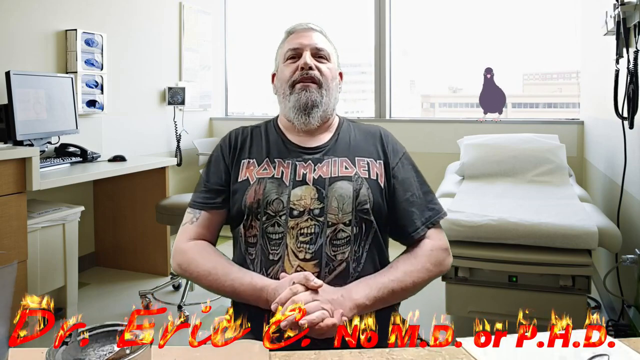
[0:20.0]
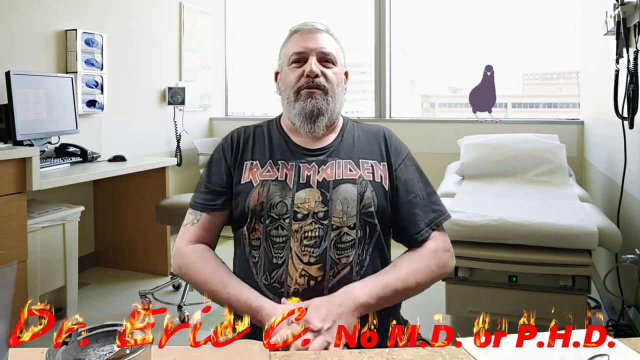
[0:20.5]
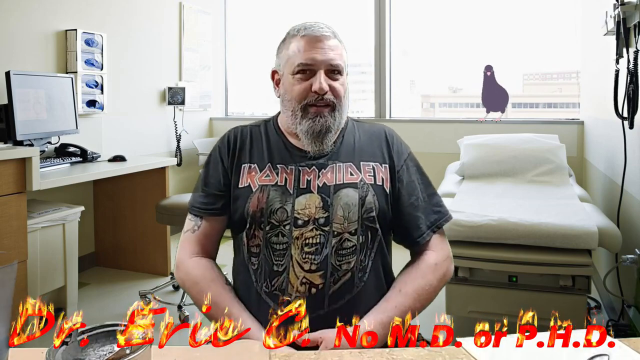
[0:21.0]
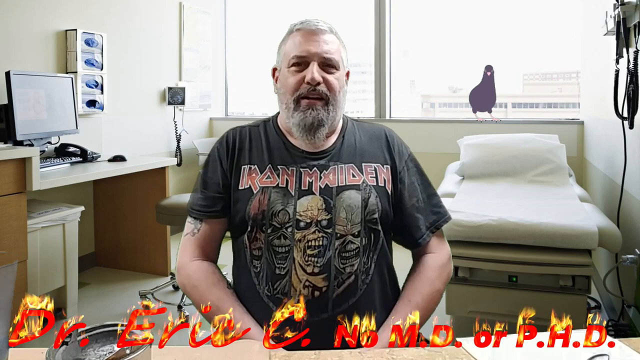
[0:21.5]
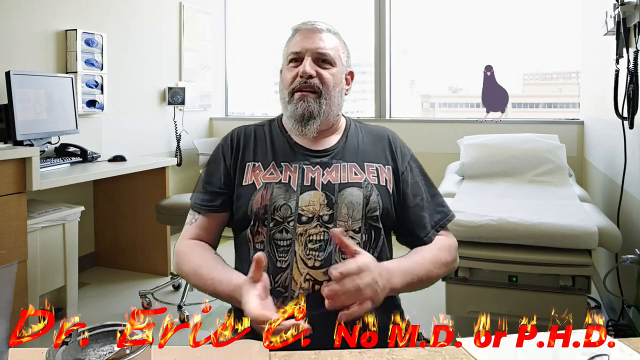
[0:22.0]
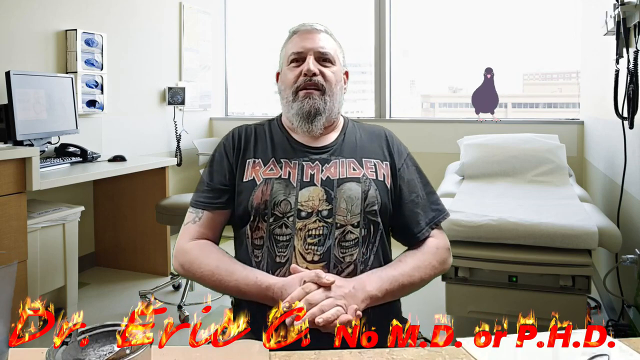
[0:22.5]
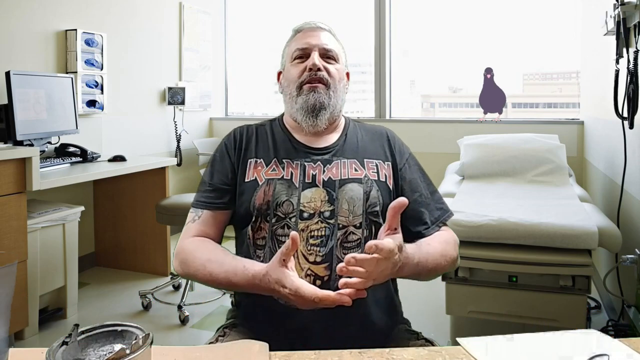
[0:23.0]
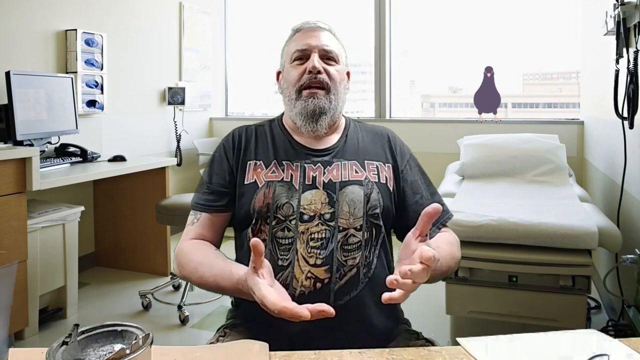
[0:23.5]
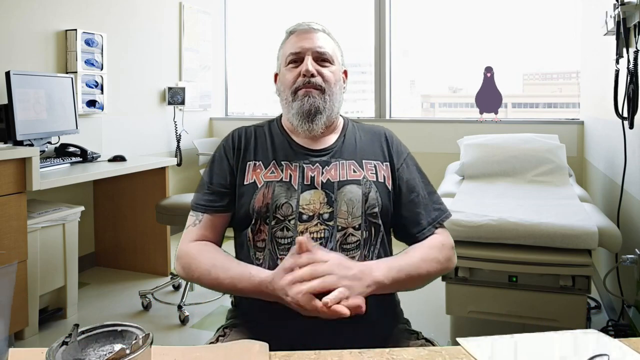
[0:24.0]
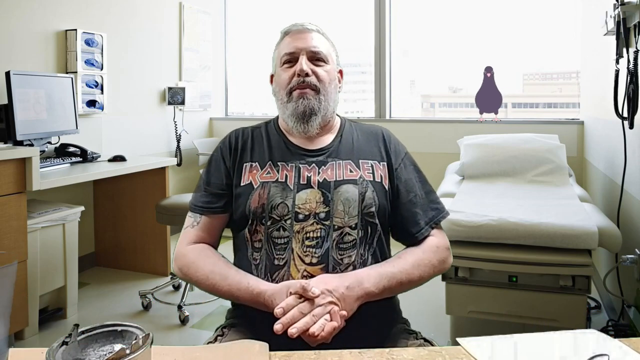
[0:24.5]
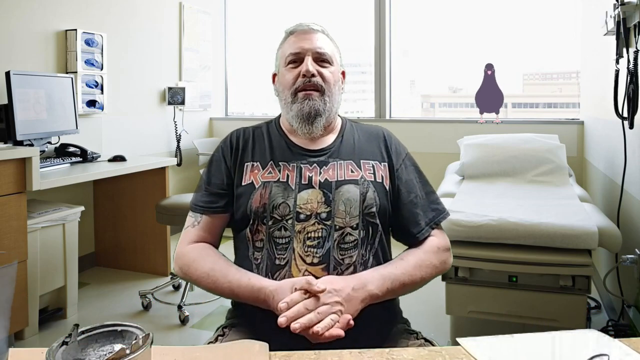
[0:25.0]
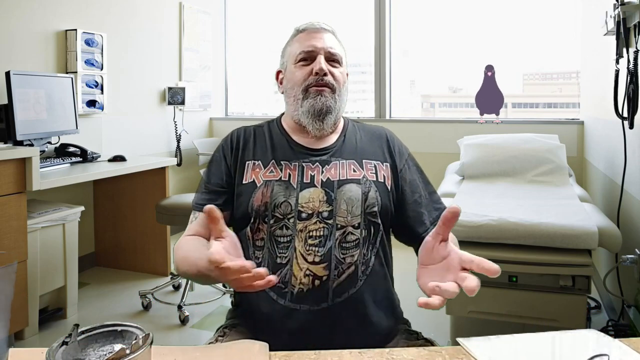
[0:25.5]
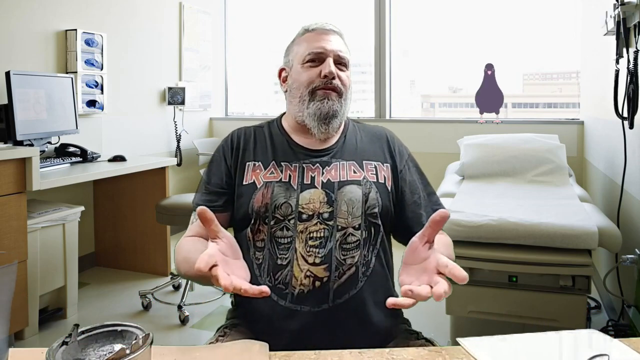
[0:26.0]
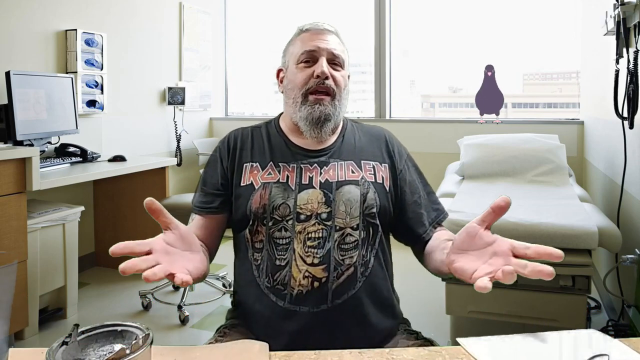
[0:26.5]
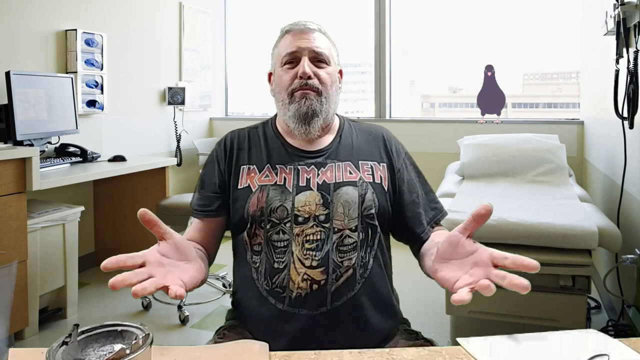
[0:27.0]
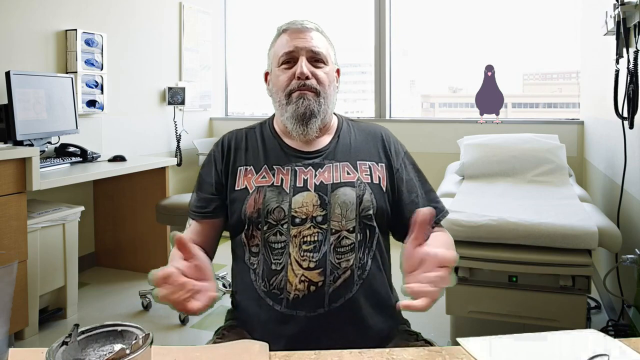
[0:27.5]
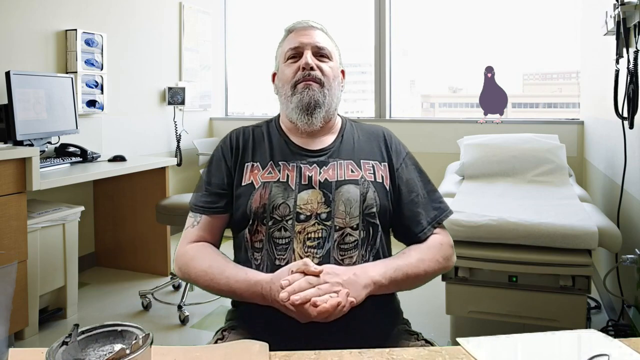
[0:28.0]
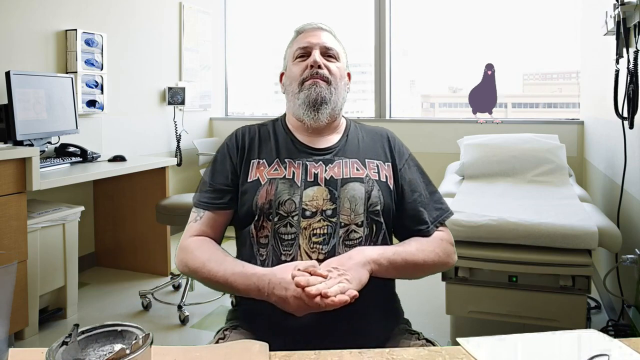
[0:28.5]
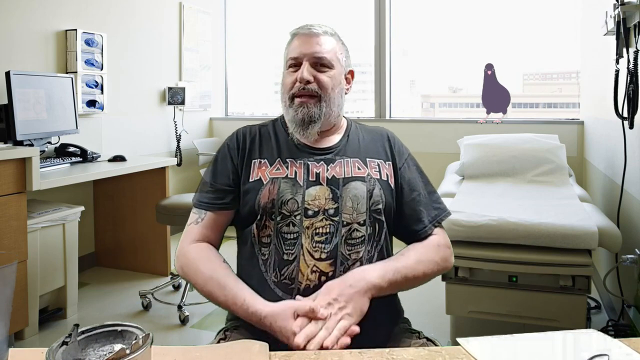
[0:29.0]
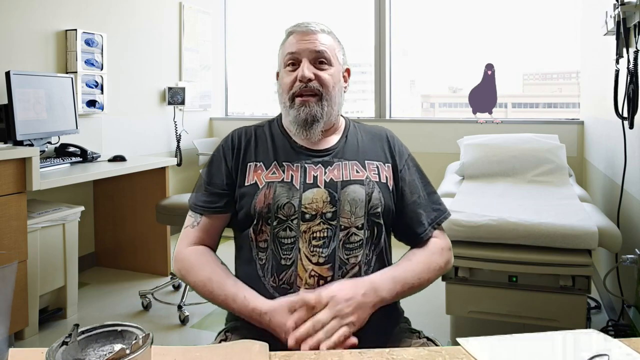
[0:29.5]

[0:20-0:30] The doctor with no MD or PhD, wearing an Iron Maiden t-shirt, talks in the examination room with the examination table behind him, while the animated crow in the window behind him appears to dance. Examination tools are on the right side of the frame. On the left side are the computer on the desk next to the phone and the mouse, a stool with rollers, and the garbage can underneath the desk. The floor appears to be gray tile. A chair by the window looks like it is for someone accompanying a patient, or for a patient not on the examination table. He appears to be on an upper floor of the building.